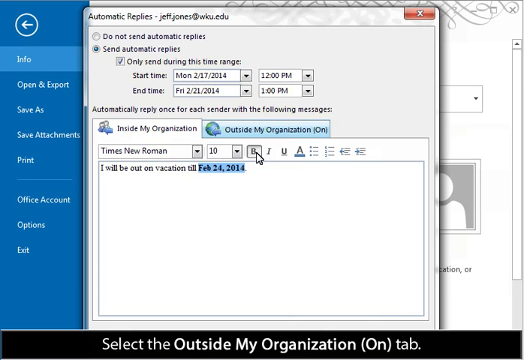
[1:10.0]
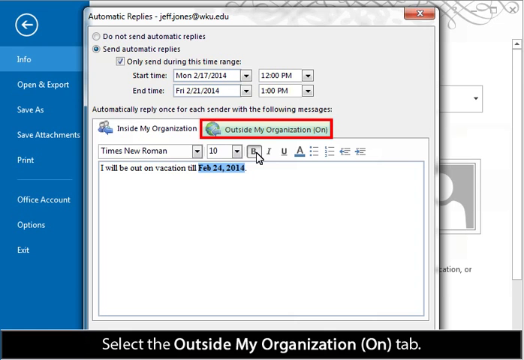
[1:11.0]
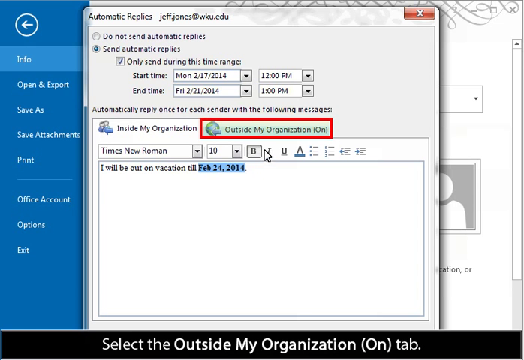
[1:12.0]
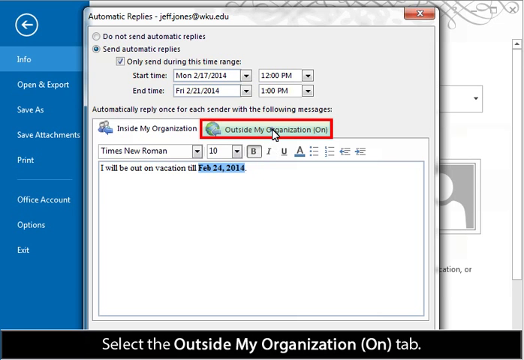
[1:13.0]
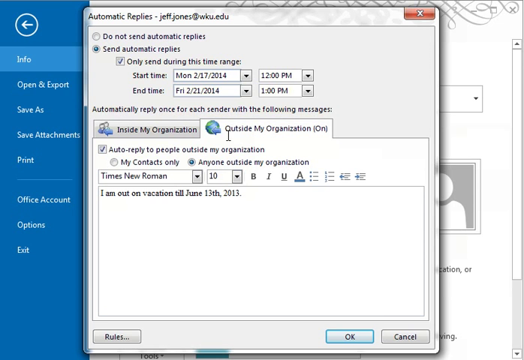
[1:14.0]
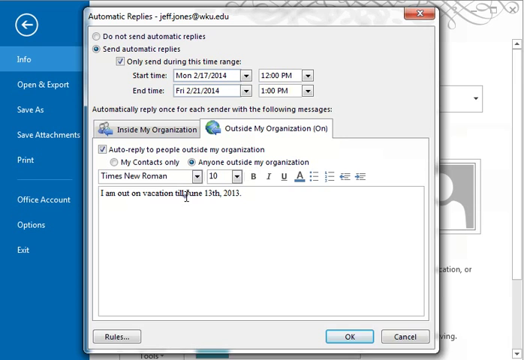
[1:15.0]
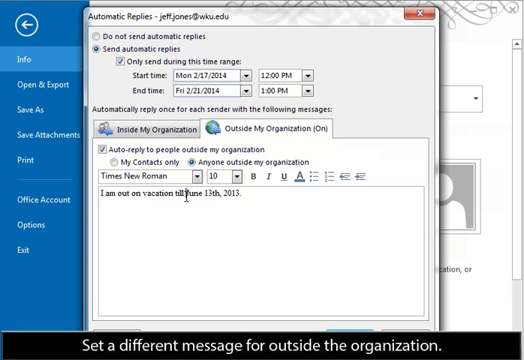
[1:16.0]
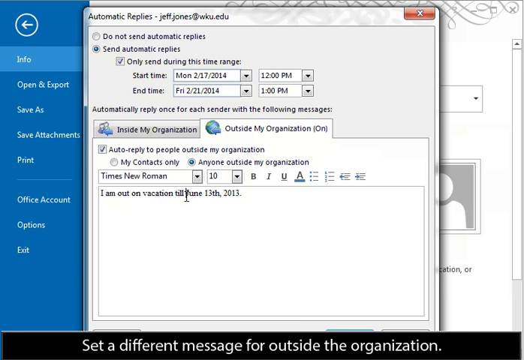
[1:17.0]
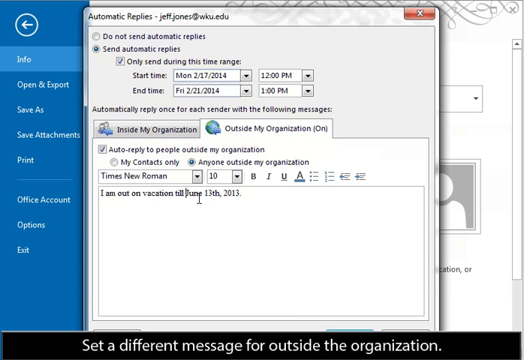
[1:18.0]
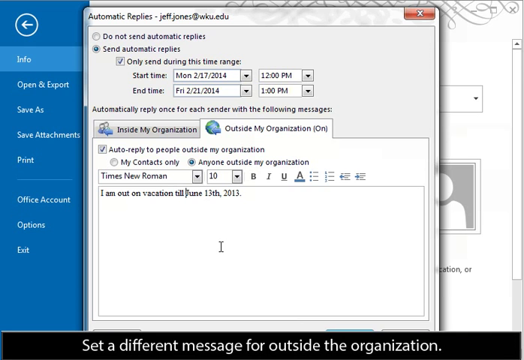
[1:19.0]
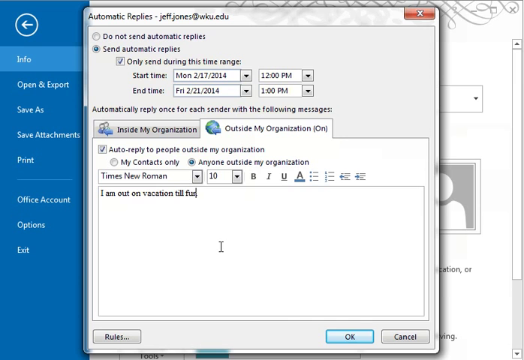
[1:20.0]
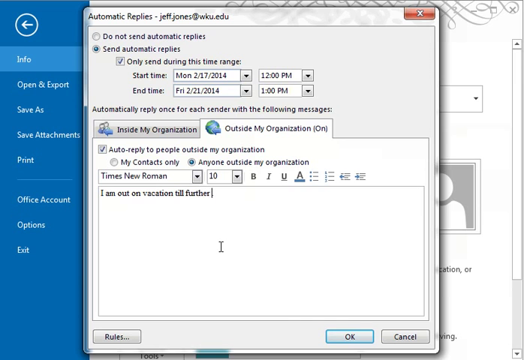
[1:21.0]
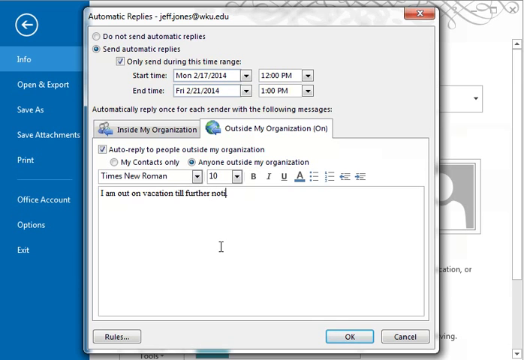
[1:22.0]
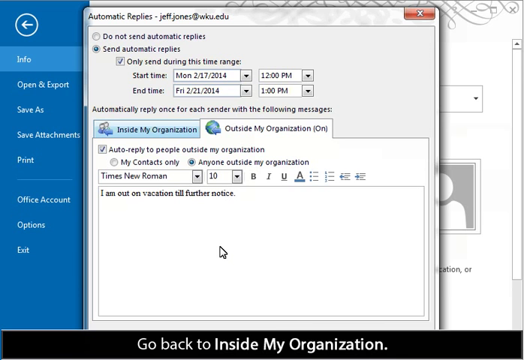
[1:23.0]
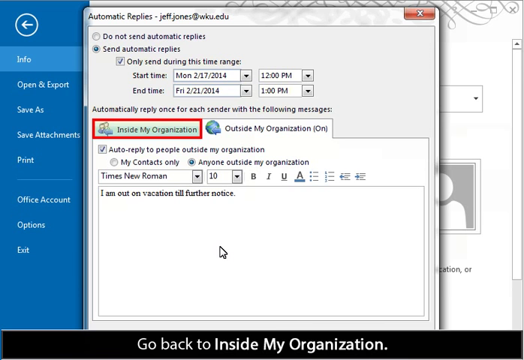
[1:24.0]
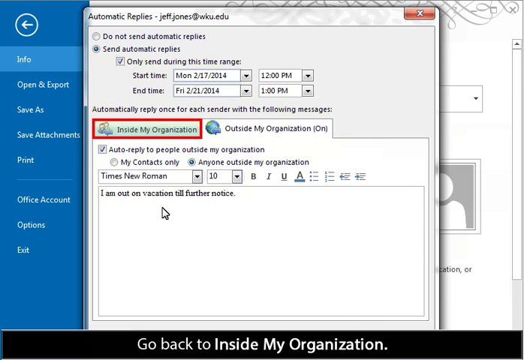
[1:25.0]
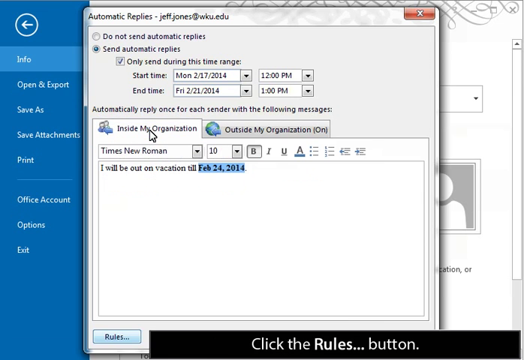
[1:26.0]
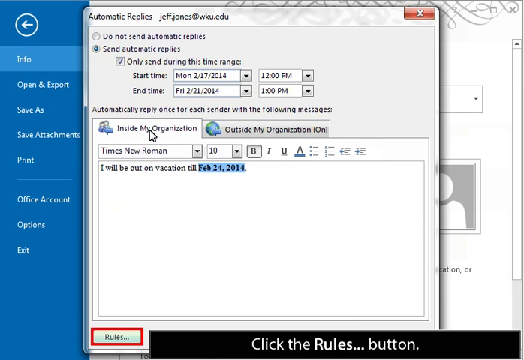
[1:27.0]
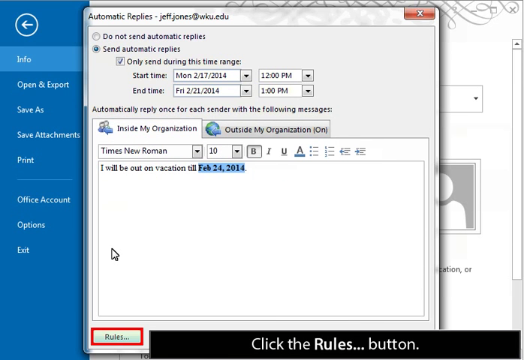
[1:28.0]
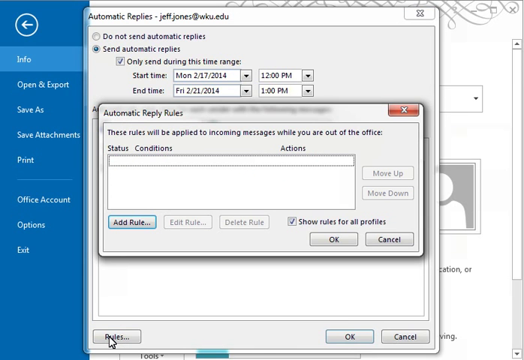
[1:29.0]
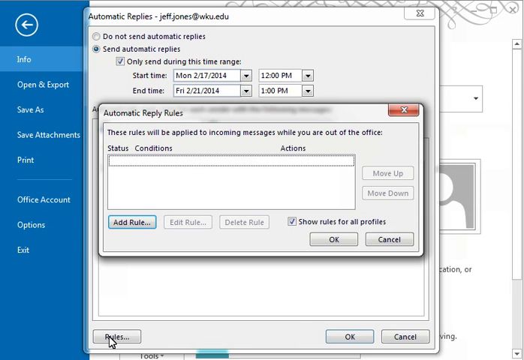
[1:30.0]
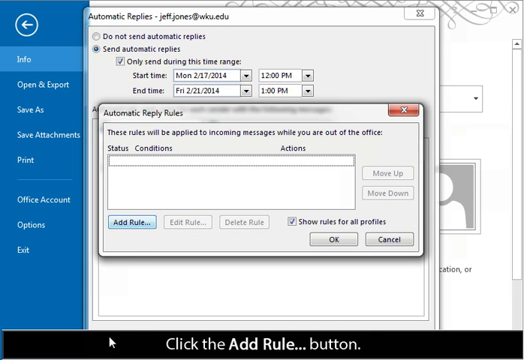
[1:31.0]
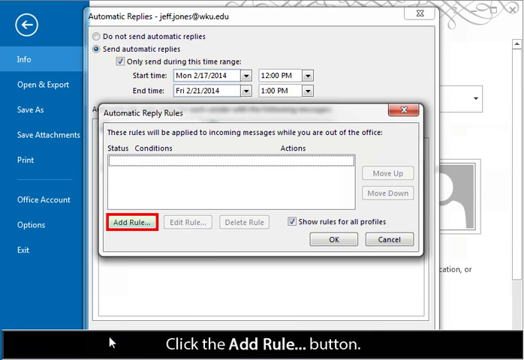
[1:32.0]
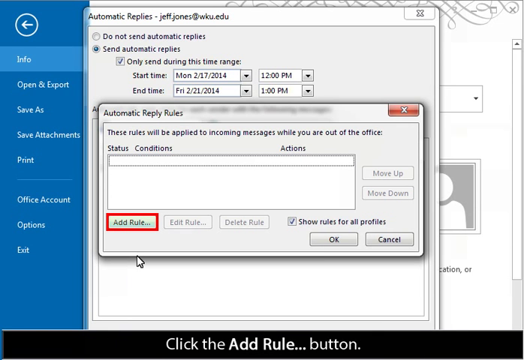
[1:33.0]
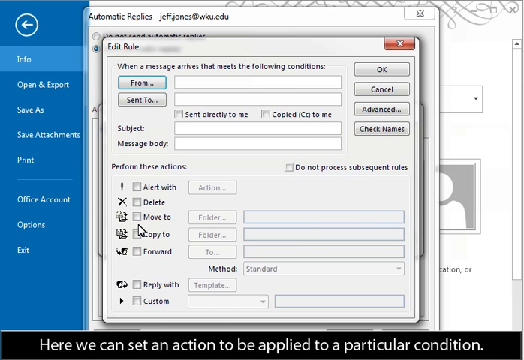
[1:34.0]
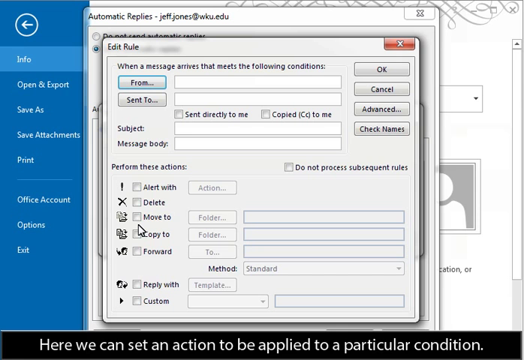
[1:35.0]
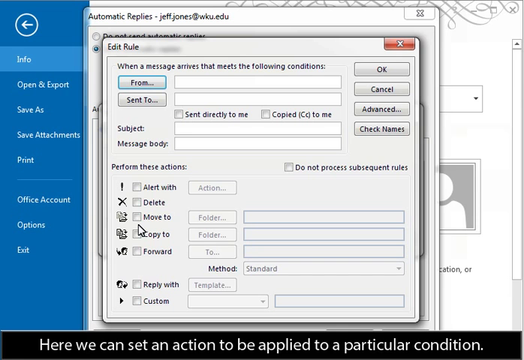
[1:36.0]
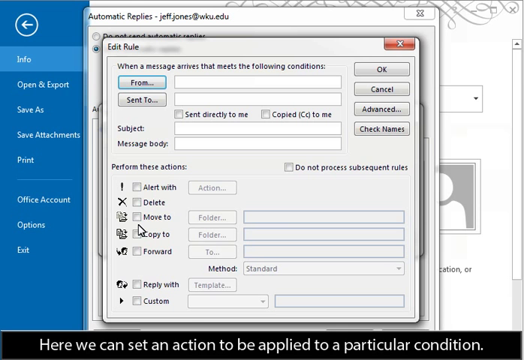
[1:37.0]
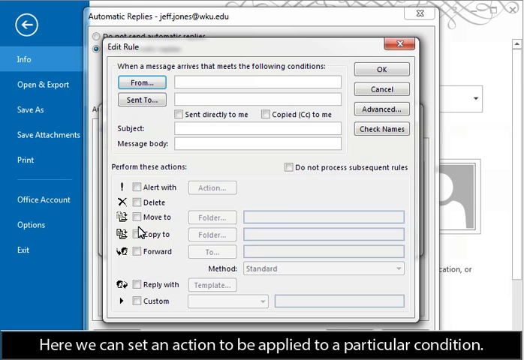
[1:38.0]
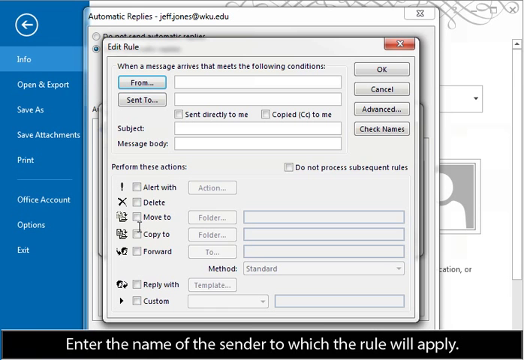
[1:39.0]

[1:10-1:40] The out-of-office assistant appears on a computer screen while a cursor moves around, demonstrating how to create a message and pick the dates. There are options for inside my organization and outside my organization, and an area for writing the message. The cursor picks outside of the organization and a message is written: "I will be out of my office until further notice." Then it picks inside my organization and writes "I will be out on vacation till Feb 24, 2014." Another box then comes up titled "Automatic Reply Rules," which says "these rules will be applied to incoming messages while you are out of the office."